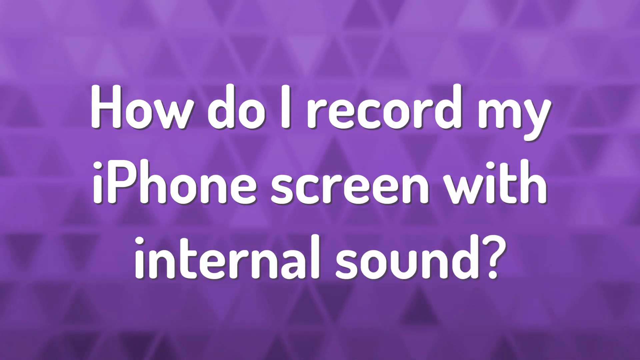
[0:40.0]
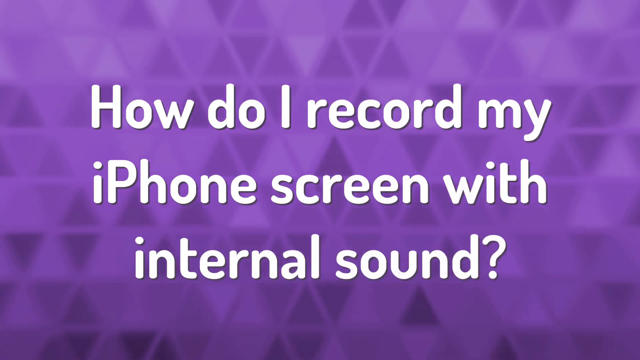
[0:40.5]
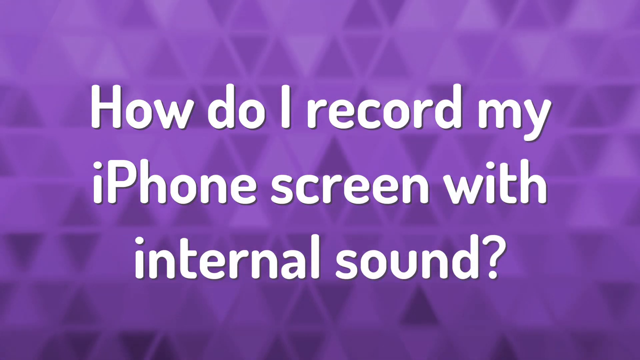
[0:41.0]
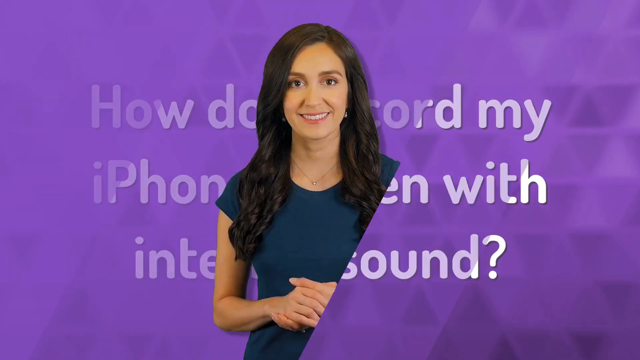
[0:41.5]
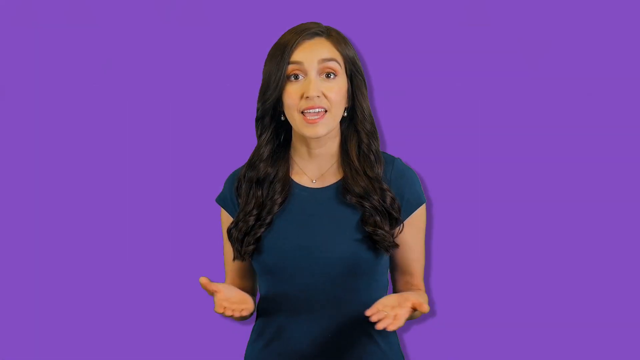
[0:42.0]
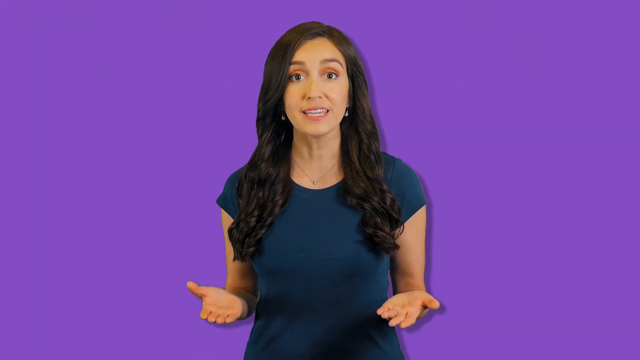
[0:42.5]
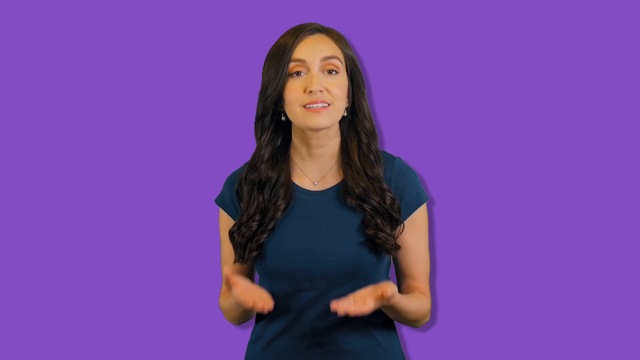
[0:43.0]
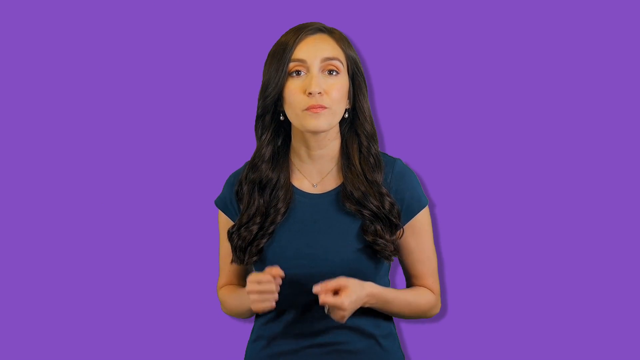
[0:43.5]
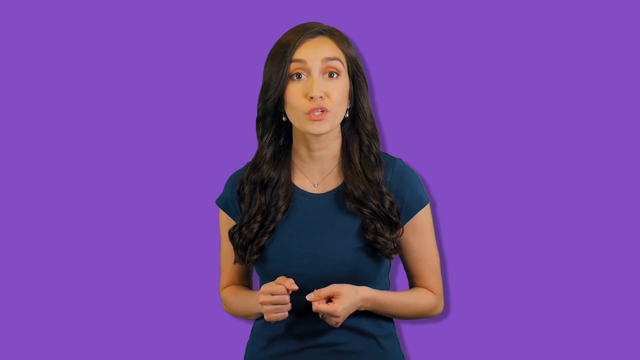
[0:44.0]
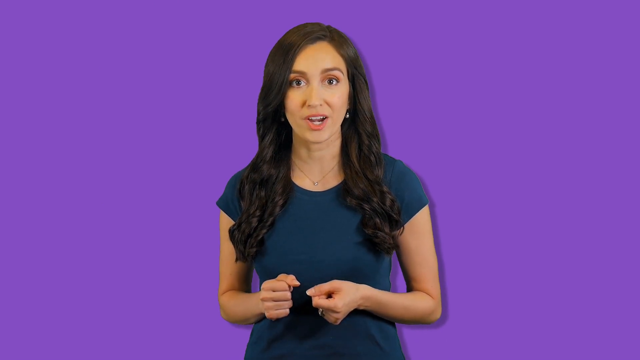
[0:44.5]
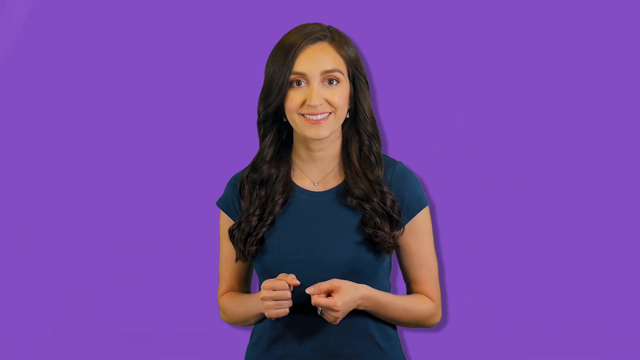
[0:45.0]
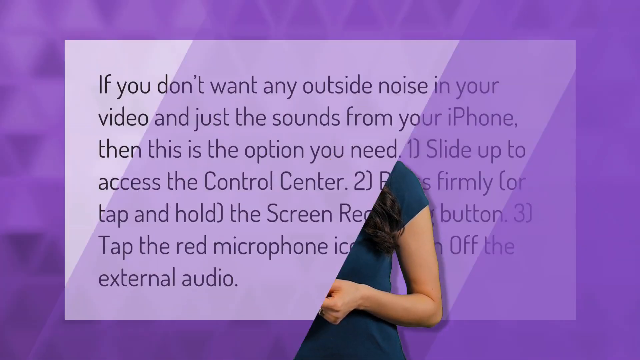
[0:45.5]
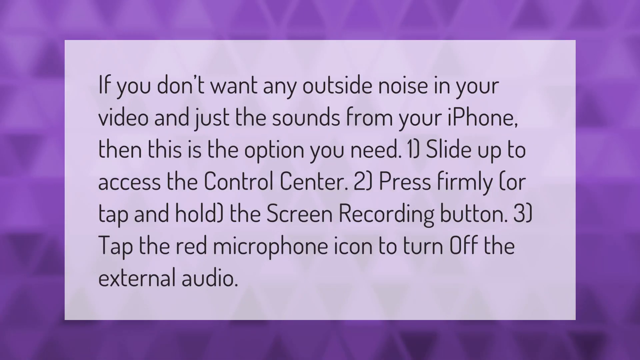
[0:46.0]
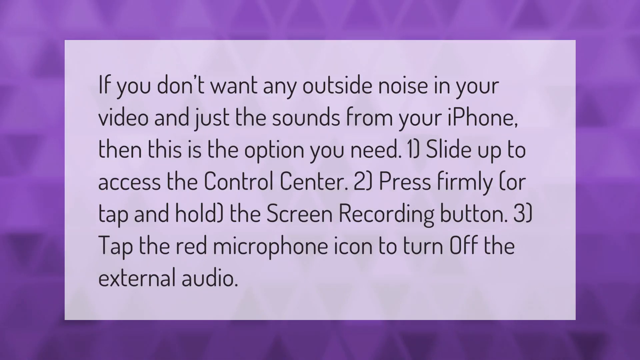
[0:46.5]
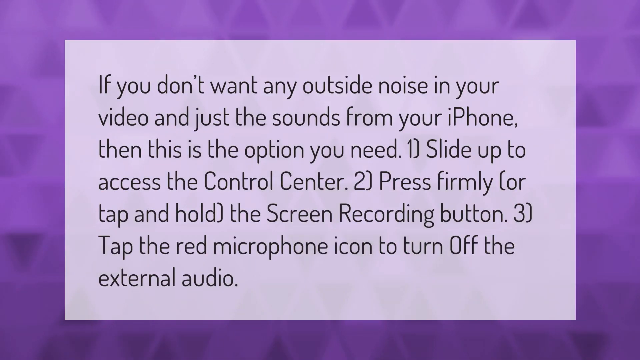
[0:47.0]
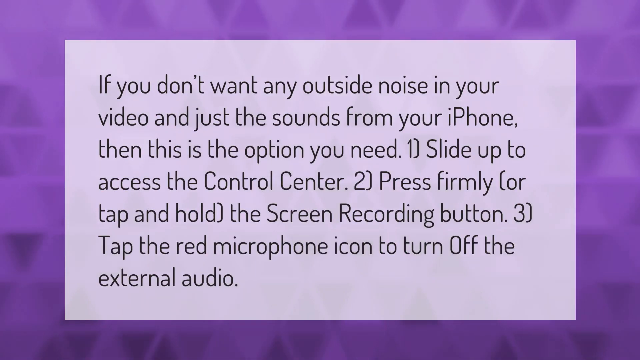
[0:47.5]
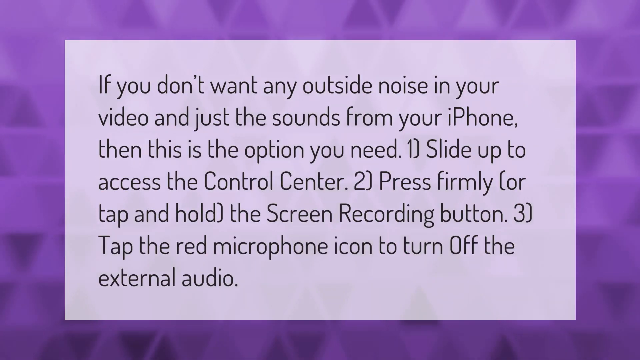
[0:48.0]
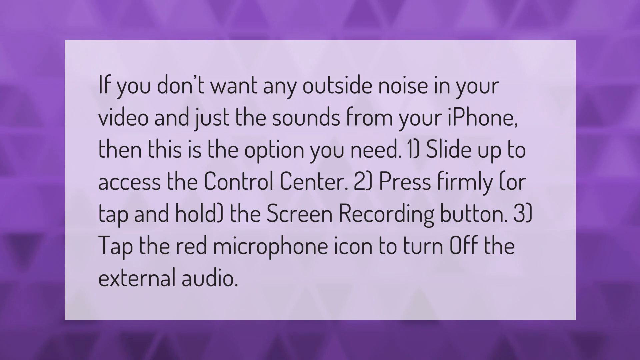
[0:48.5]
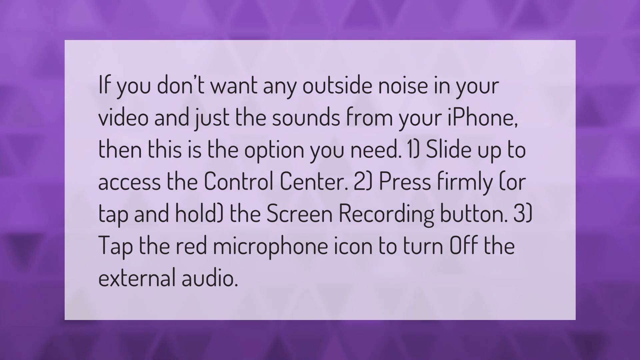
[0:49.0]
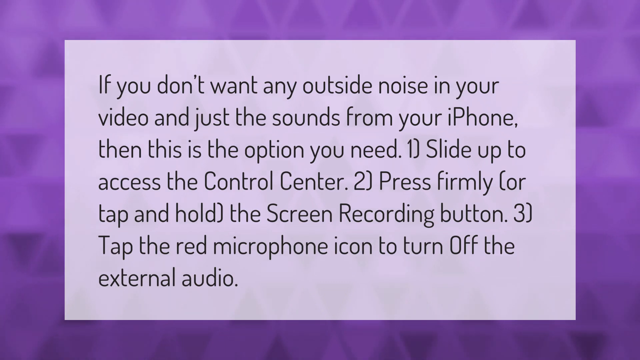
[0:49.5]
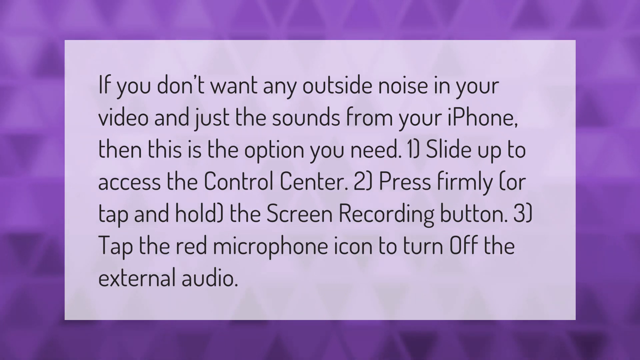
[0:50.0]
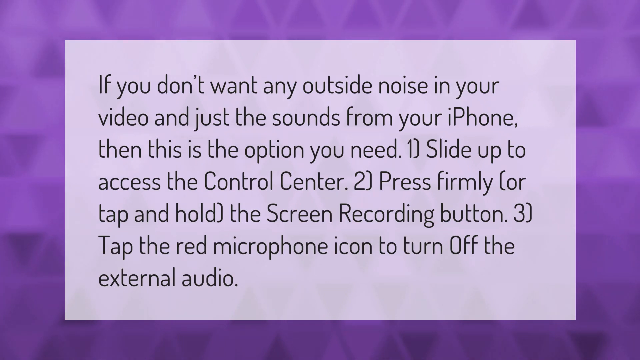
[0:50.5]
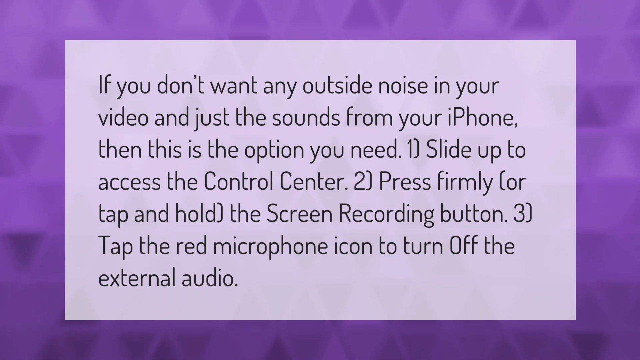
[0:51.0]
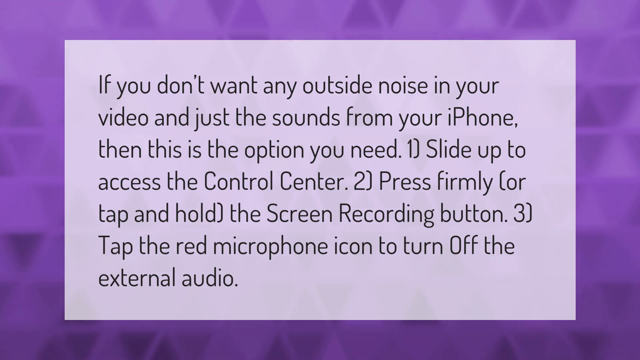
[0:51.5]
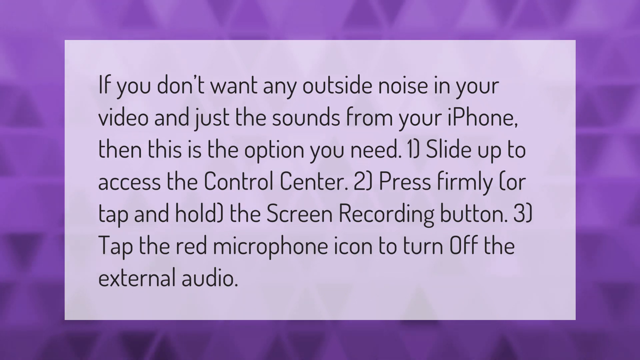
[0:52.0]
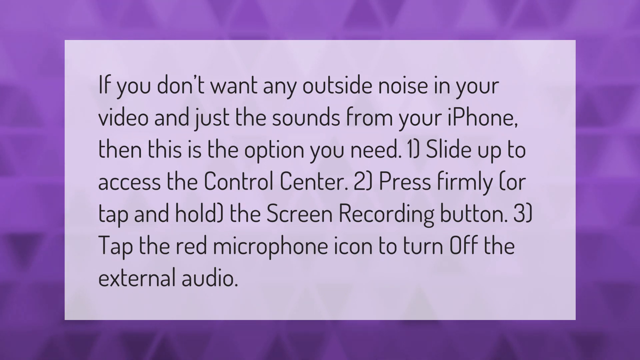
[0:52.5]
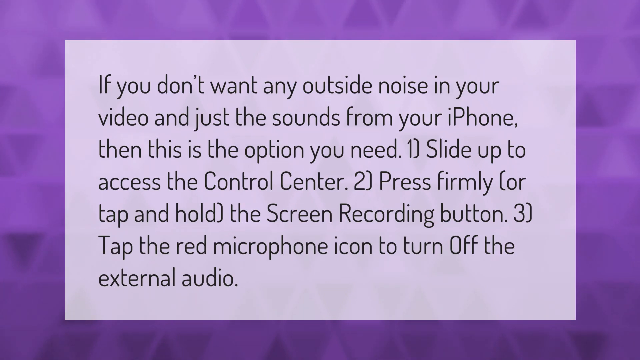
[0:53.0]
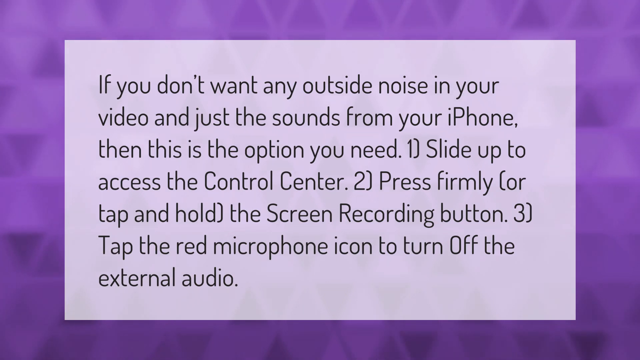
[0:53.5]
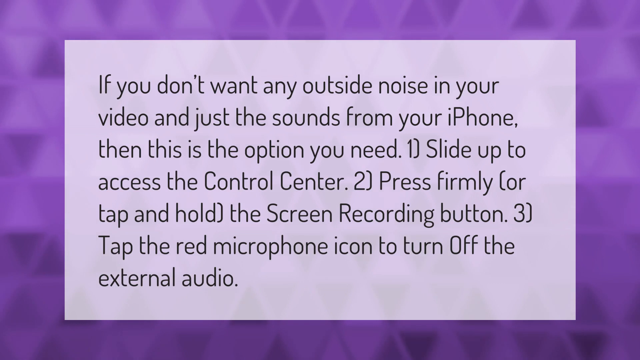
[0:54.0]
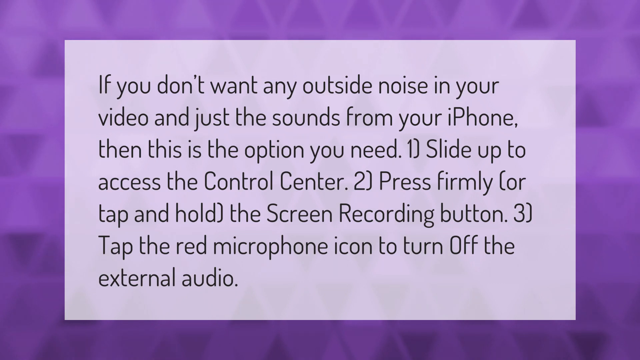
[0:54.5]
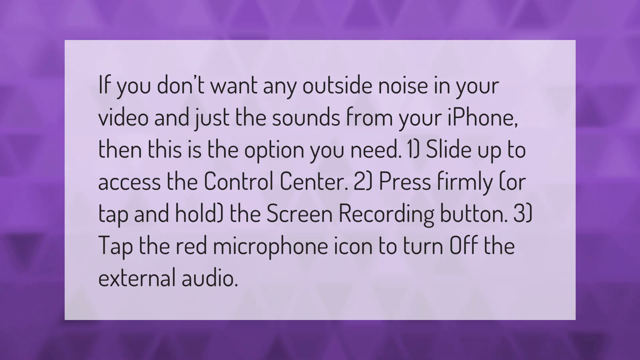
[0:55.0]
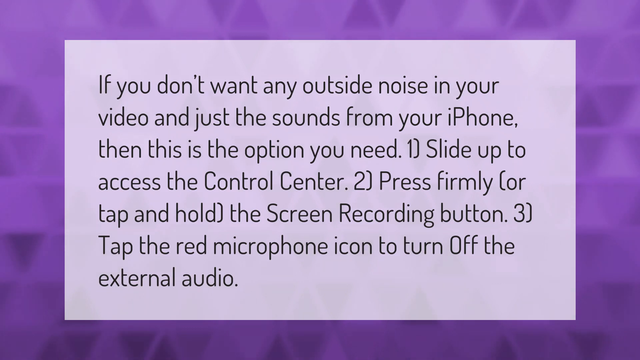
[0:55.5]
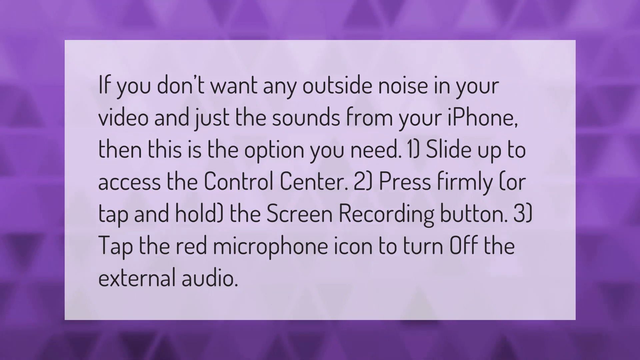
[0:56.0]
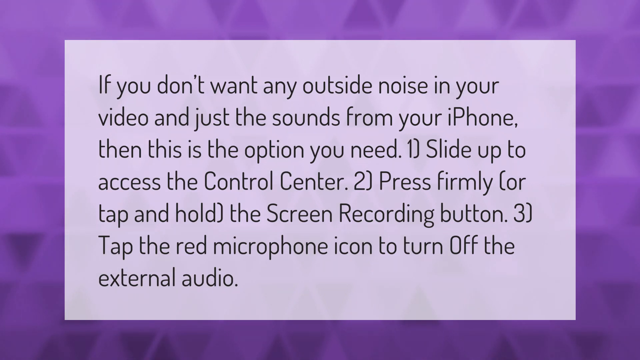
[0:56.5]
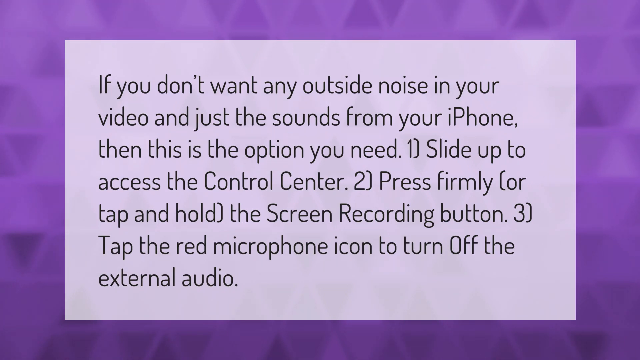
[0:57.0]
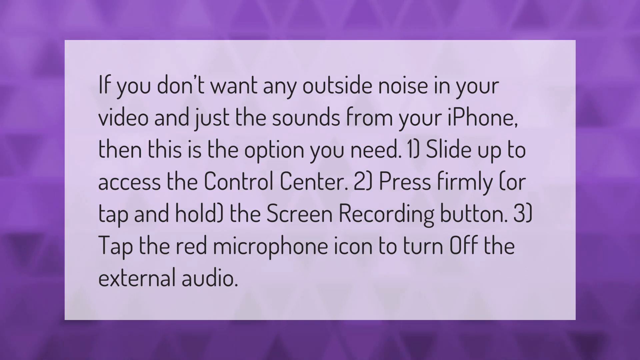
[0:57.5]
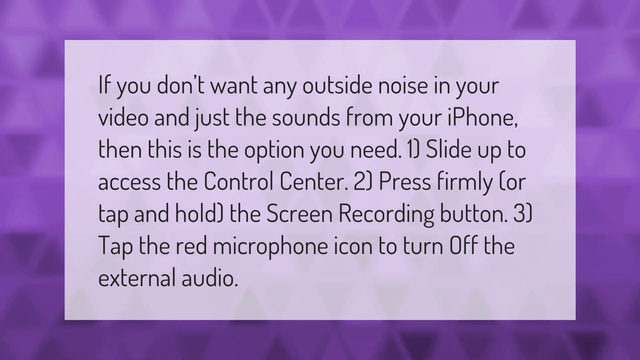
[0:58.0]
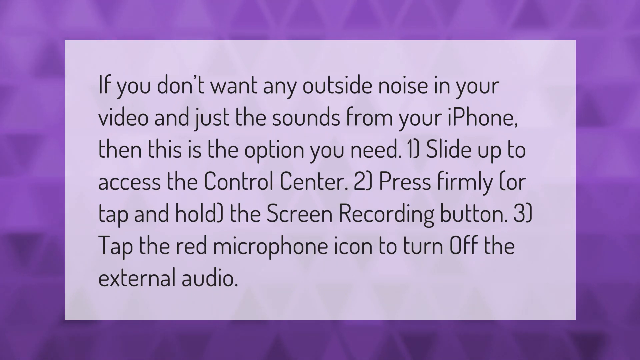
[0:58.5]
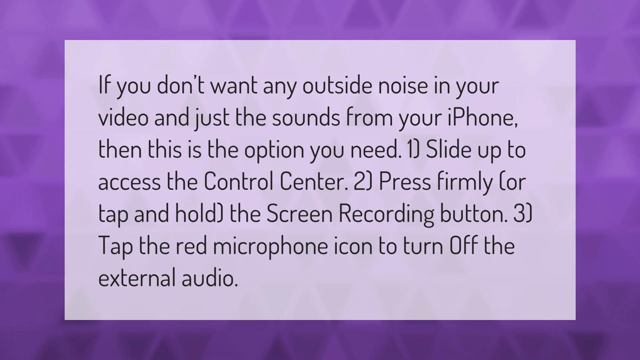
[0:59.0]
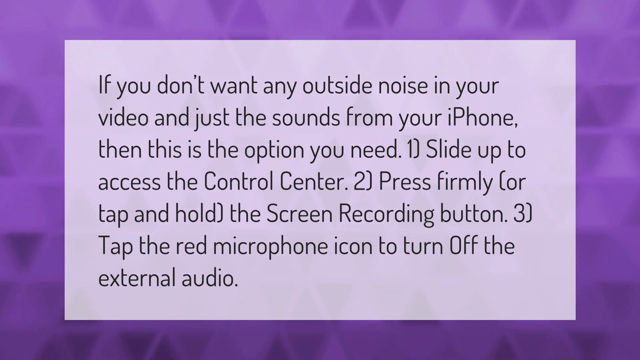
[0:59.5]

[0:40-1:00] A lavender background in shades from light to dark is patterned with small triangles, some upright and others pointing down, forming patterns when put together. White text over the screen reads "how do I record my iPhone screen with internal sound?" The video transitions to a solid lavender background with an image of a woman. She has long brown hair to her chest and wears light makeup, dangling earrings, a gold necklace and a teal short-sleeved pullover shirt. She talks, using hand gestures, eye movement, eyebrow movement and smiles. Next, a lavender background with upward- and downward-pointing triangles appears with a white box of black text over it: "if you don't want any outside noise in your video and just the sounds from your iPhone, then this is the option you need. One, slide up to access the control center. Two, press firmly or tap and hold the screen recording button. 3. Tap the red microphone icon to turn off the external audio."